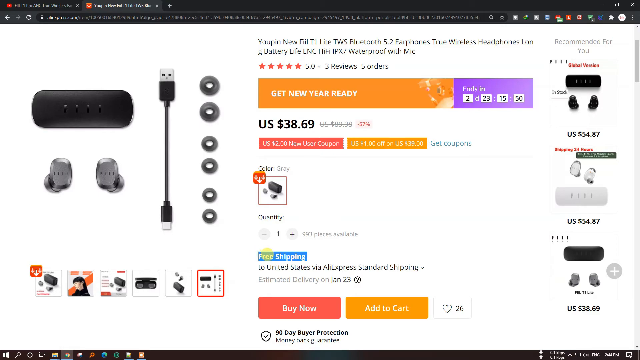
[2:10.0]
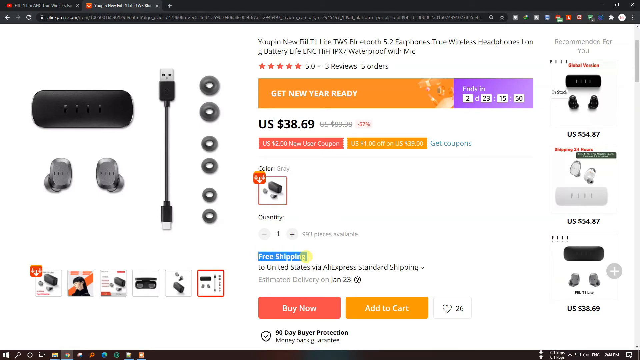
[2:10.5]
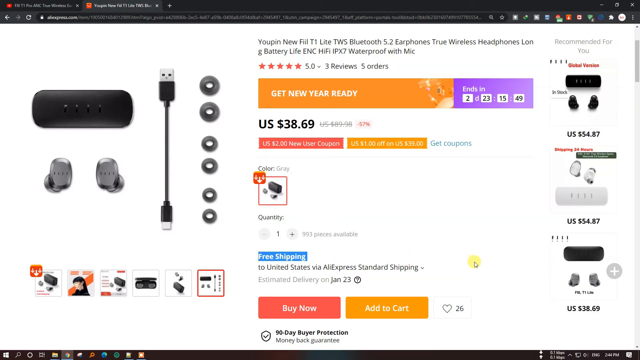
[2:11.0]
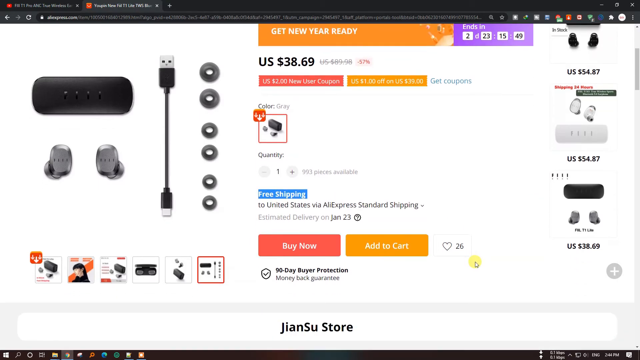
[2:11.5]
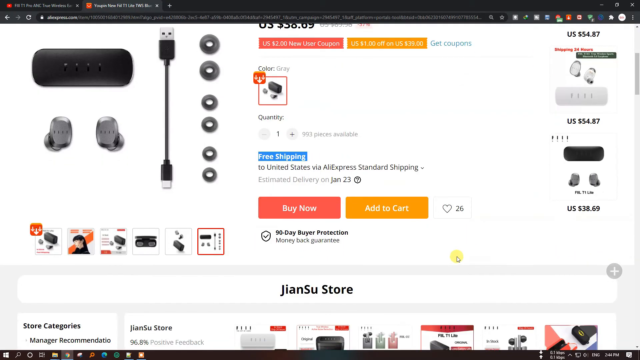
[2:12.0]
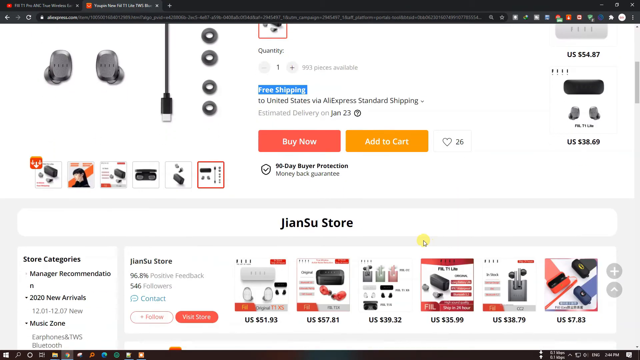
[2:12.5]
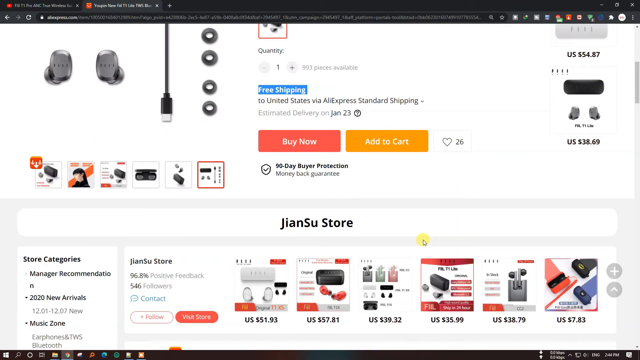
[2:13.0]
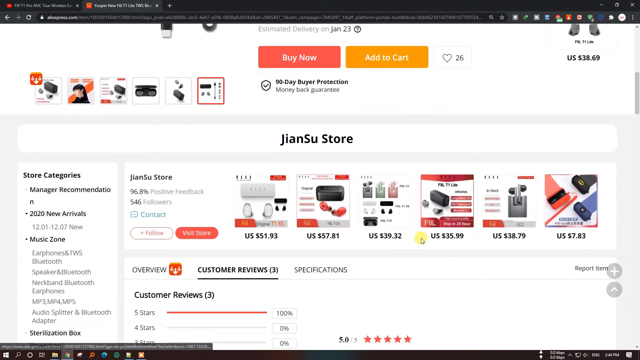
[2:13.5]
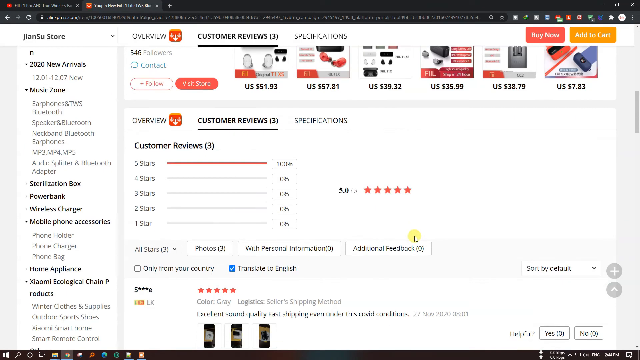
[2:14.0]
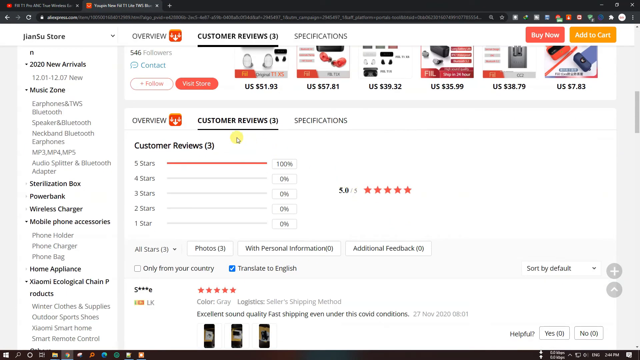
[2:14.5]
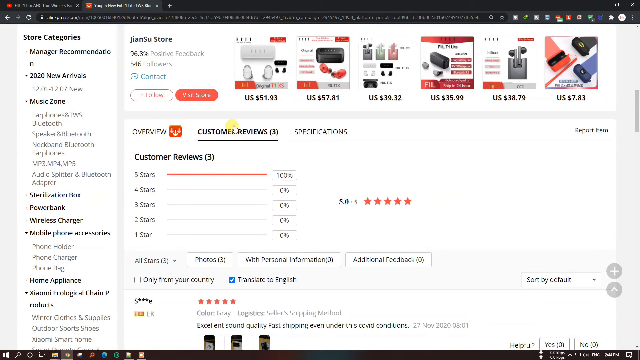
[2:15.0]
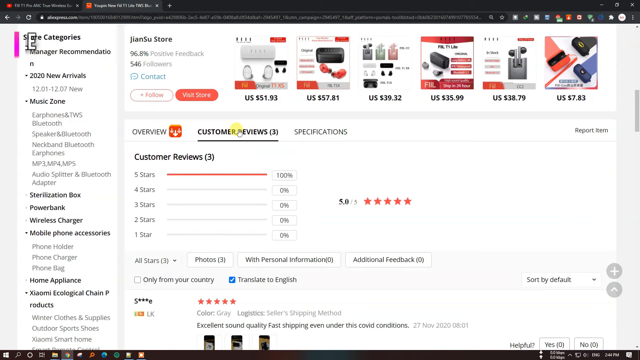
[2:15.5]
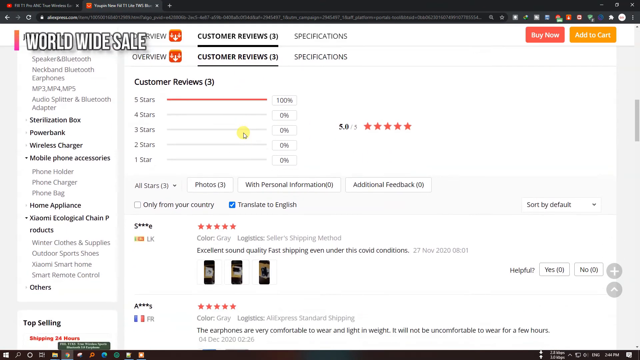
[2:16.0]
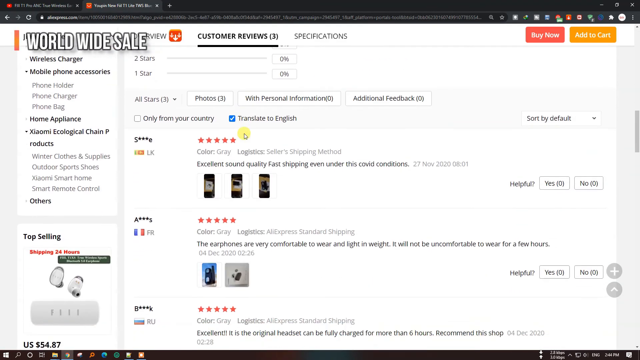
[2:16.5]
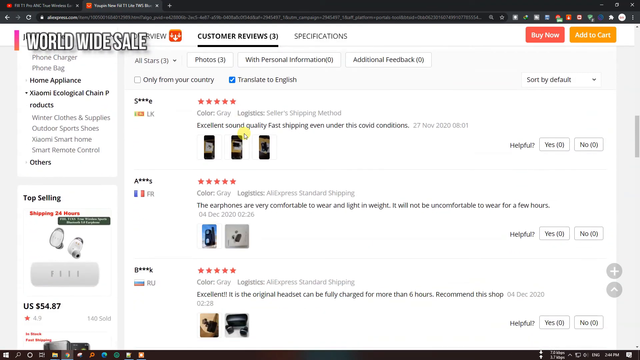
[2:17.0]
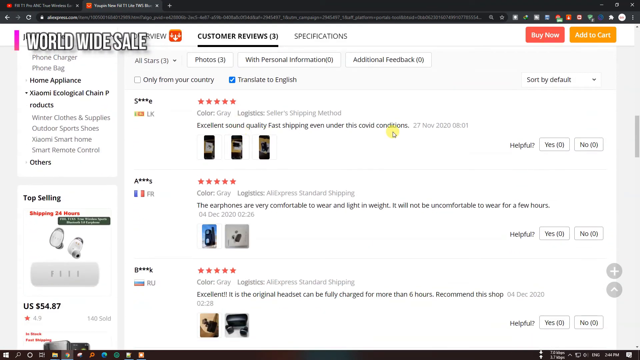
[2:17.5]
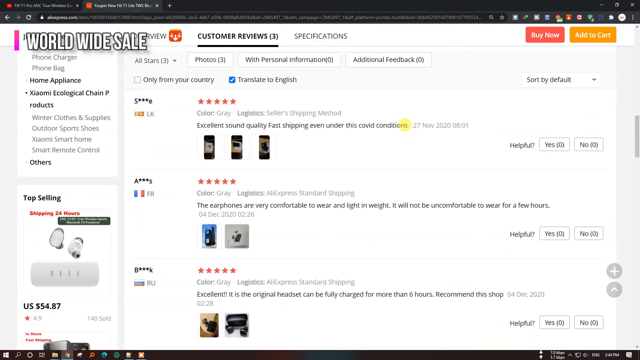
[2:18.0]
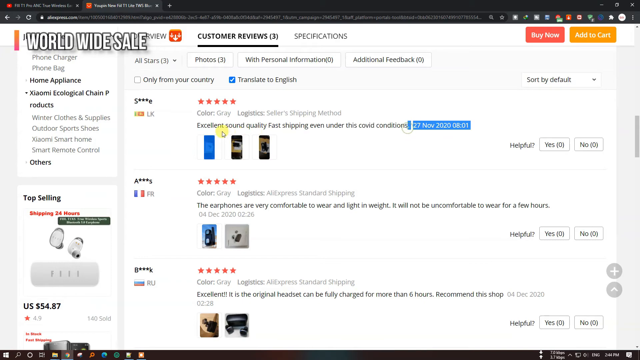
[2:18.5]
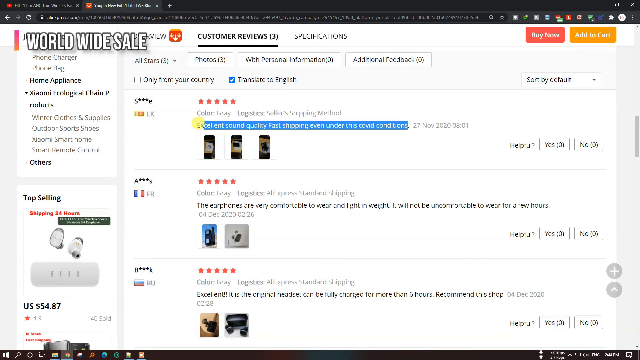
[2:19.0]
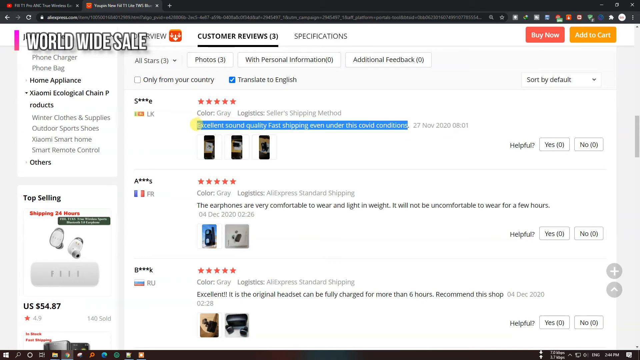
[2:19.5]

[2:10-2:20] The user of the Chinese e-commerce website moves down the page of the Jian Su store, scrolling to the customer reviews, of which there are three. The first, a five-star review dated November 2020, says "excellent sound quality fast shipping even under the covid restrictions". The second, also five stars, says "the earphones are very comfortable to wear and light in weight it will not be uncomfortable to wear for a few hours". The final one says "excellent" with lots of exclamation marks, followed by "it is the original handset can be fully charged for more than six hours recommend this shop"; it was posted on the 4th of December 2020.